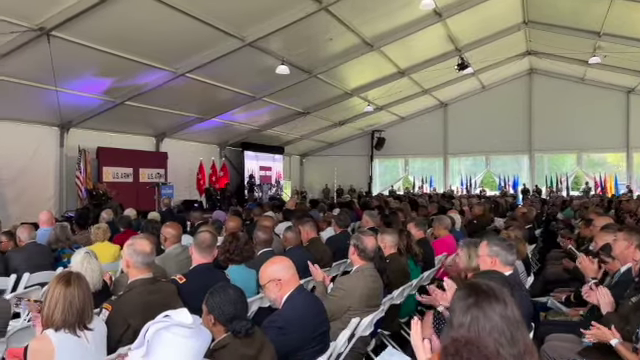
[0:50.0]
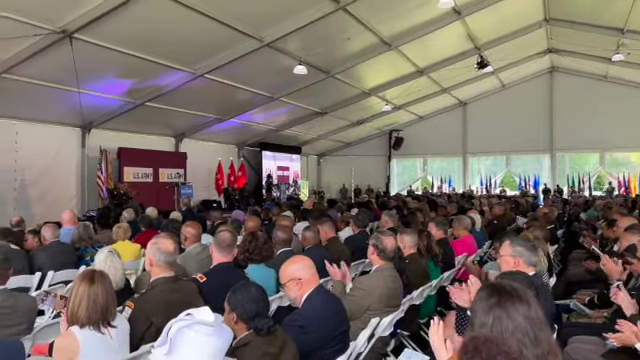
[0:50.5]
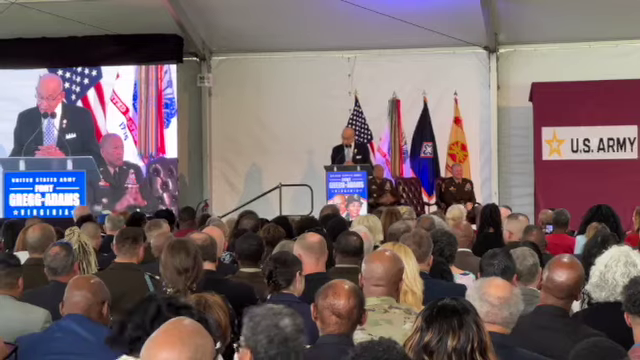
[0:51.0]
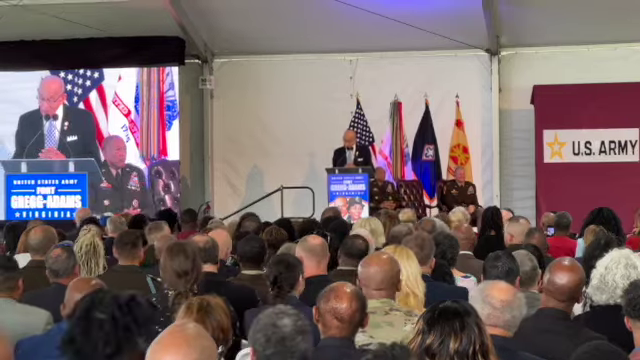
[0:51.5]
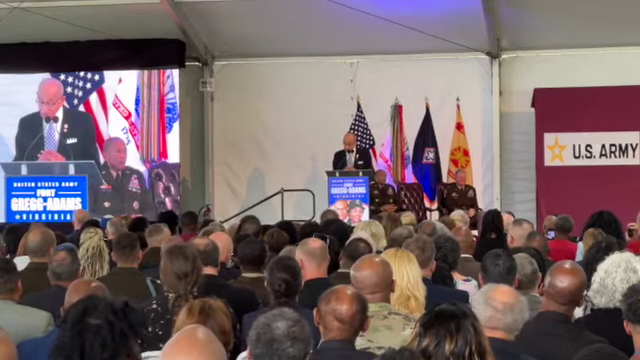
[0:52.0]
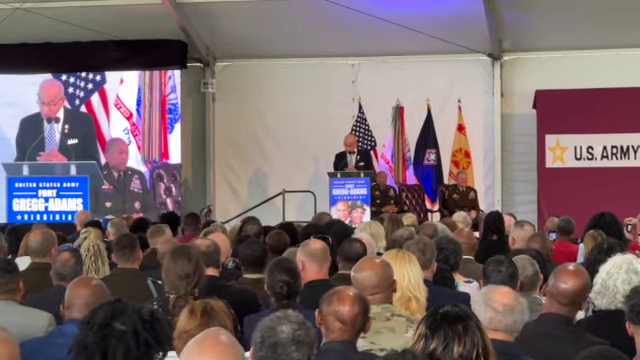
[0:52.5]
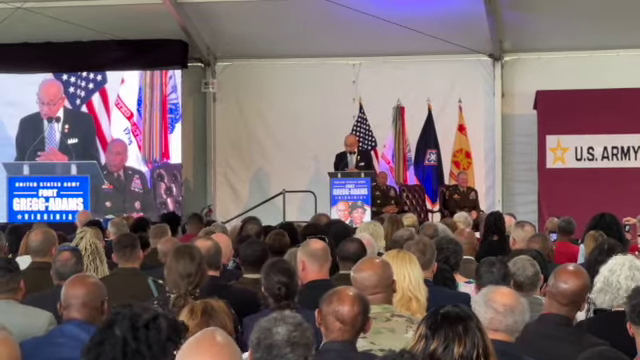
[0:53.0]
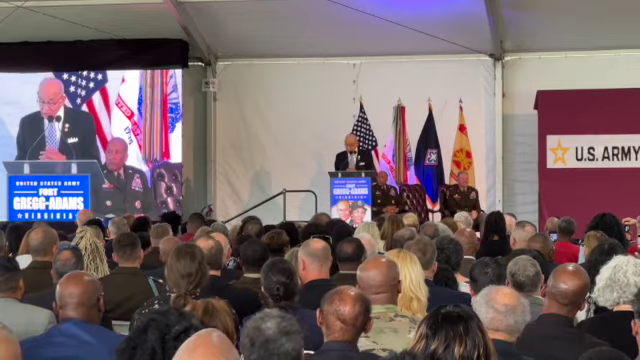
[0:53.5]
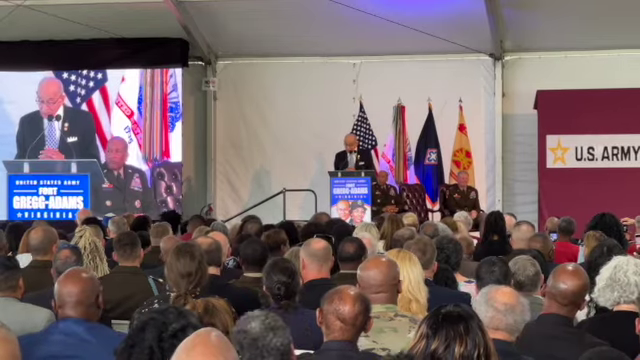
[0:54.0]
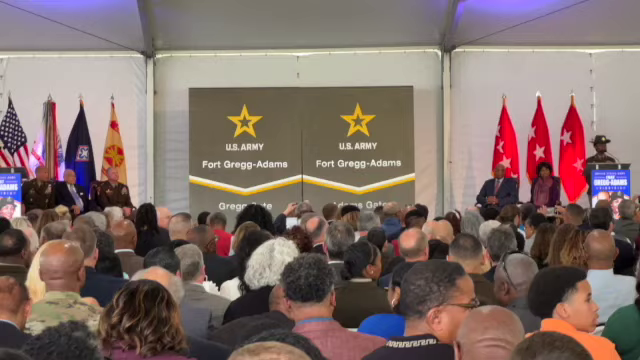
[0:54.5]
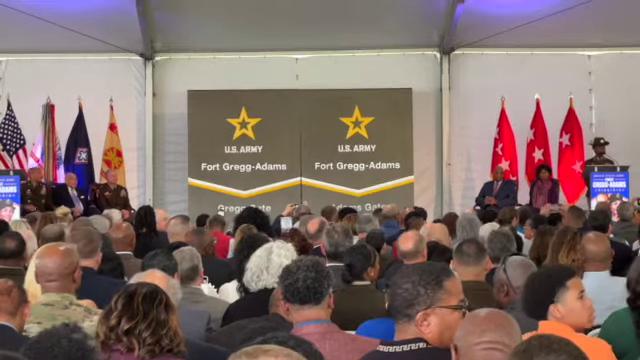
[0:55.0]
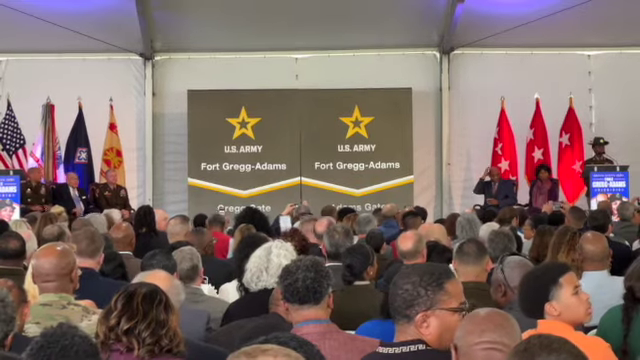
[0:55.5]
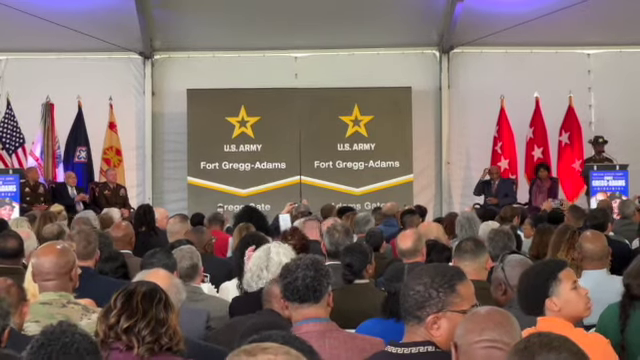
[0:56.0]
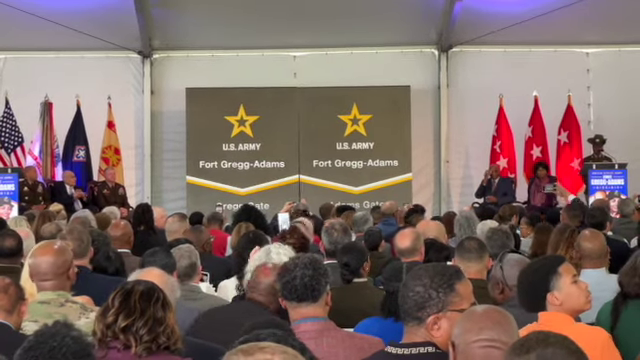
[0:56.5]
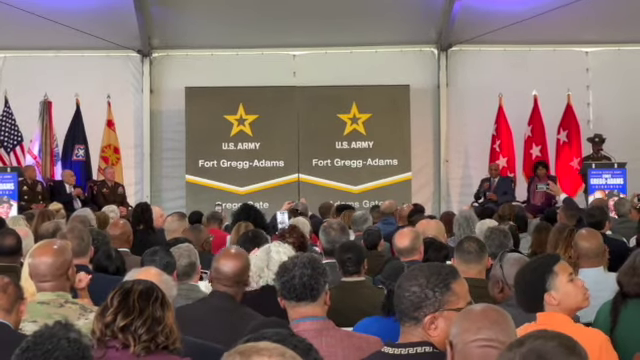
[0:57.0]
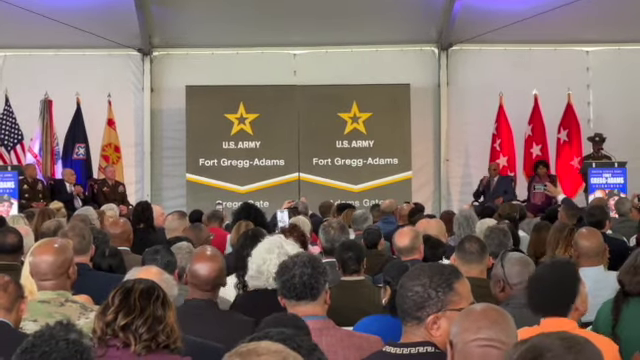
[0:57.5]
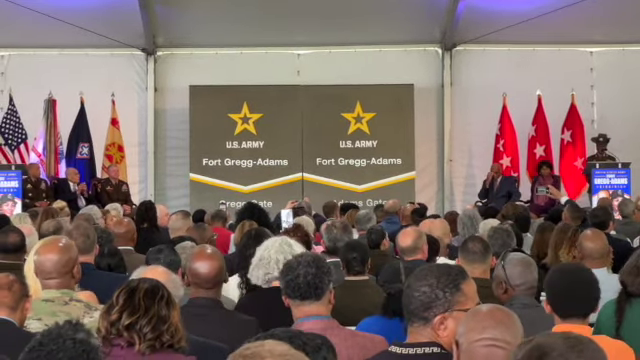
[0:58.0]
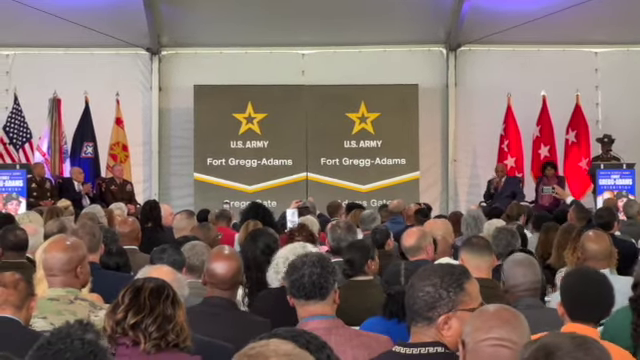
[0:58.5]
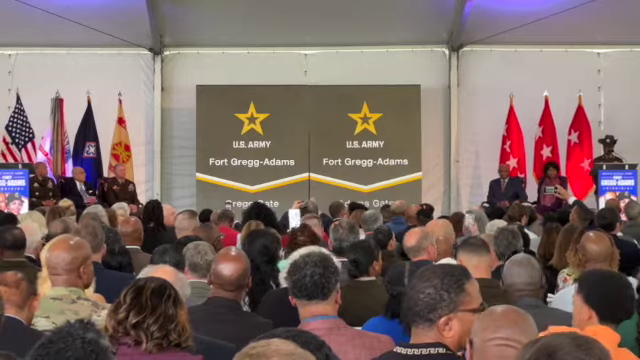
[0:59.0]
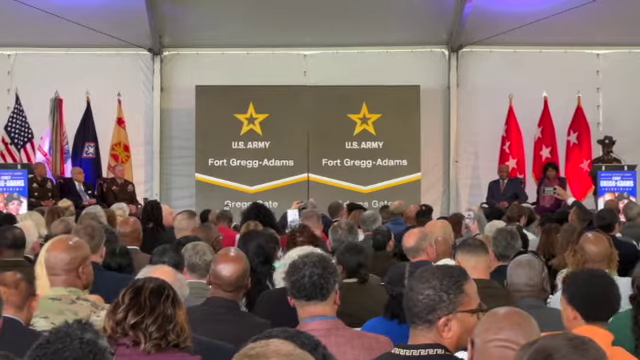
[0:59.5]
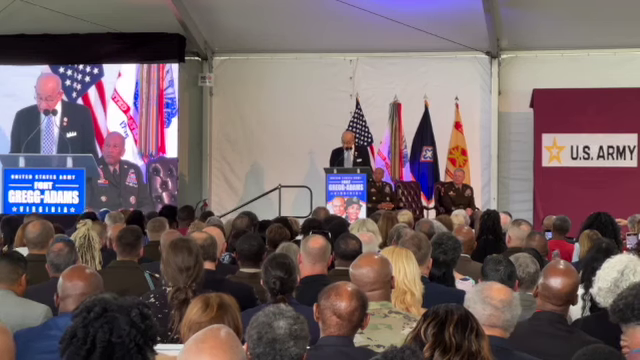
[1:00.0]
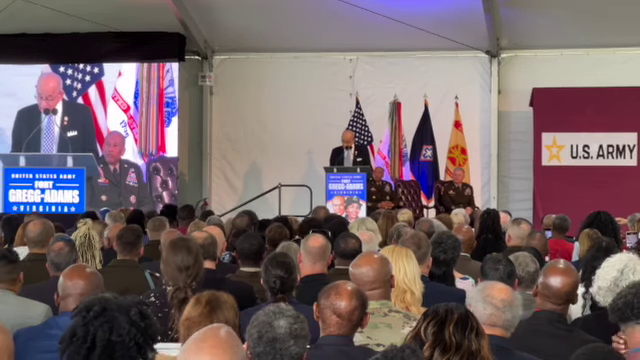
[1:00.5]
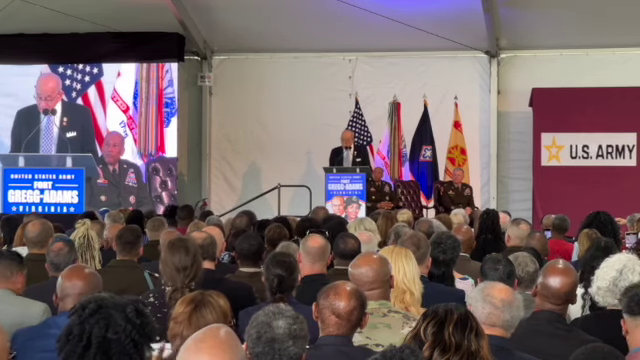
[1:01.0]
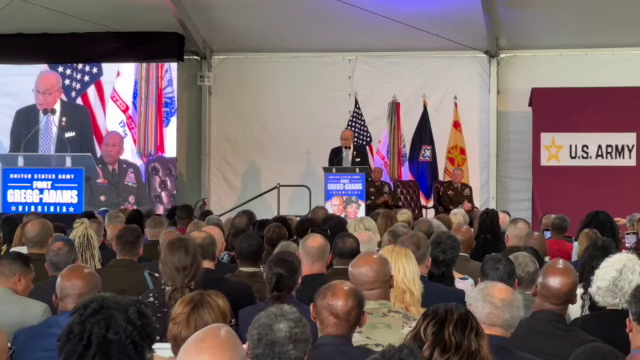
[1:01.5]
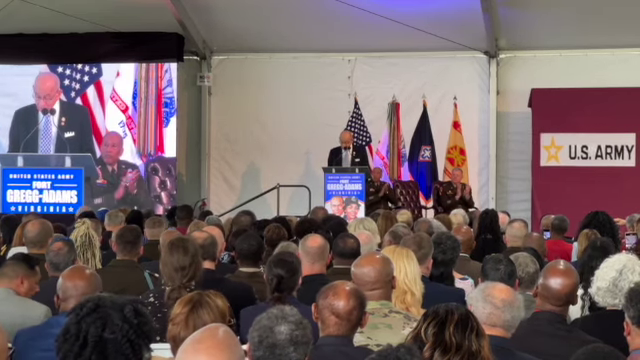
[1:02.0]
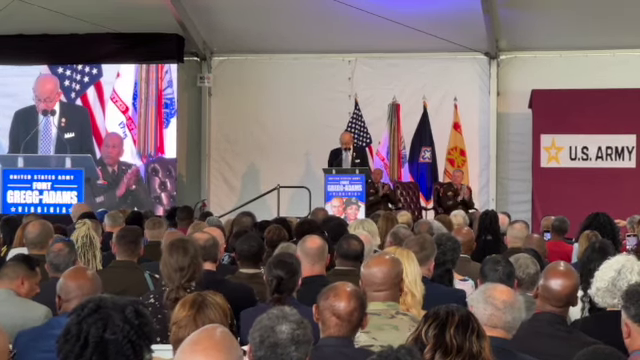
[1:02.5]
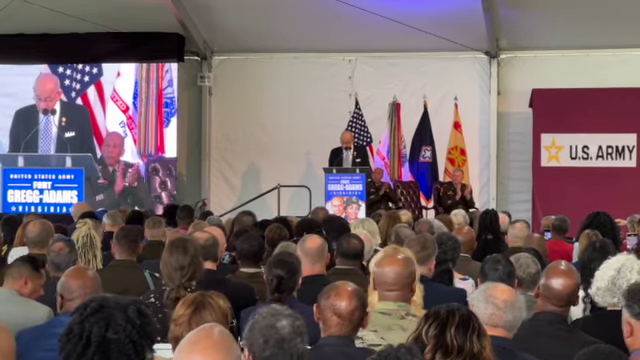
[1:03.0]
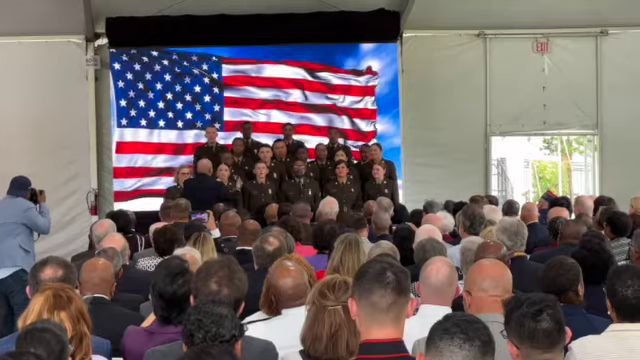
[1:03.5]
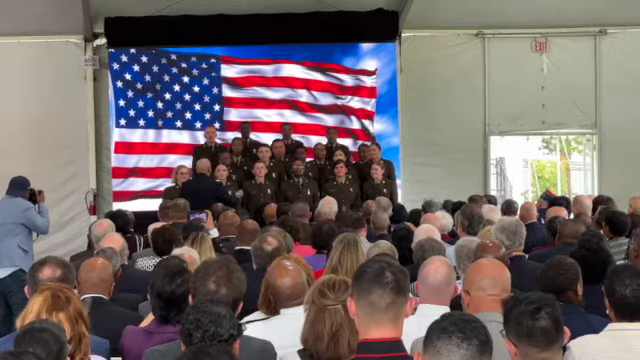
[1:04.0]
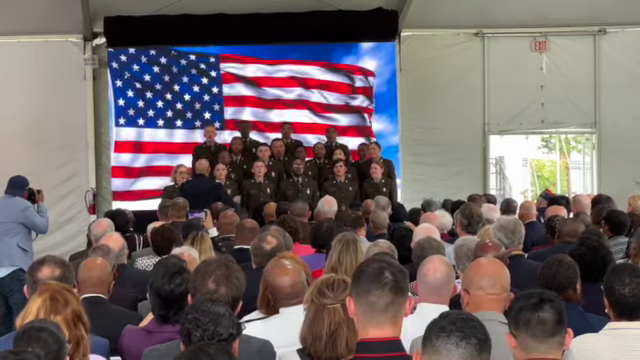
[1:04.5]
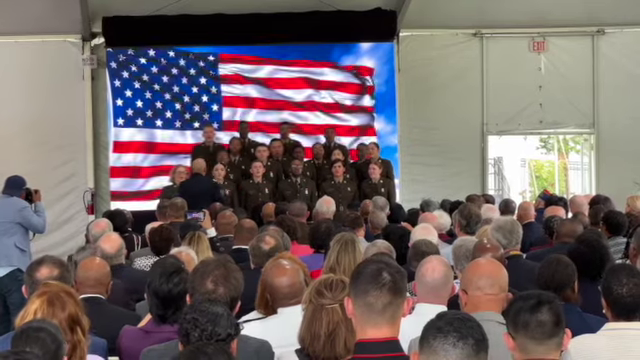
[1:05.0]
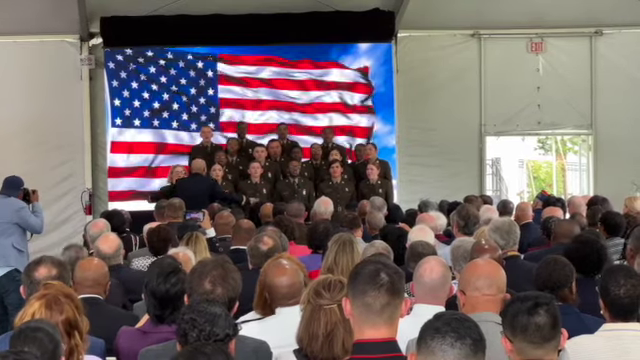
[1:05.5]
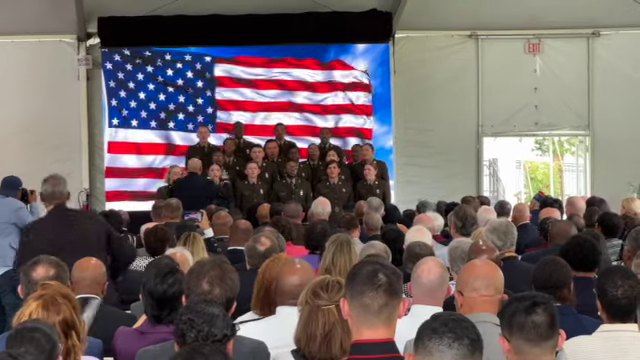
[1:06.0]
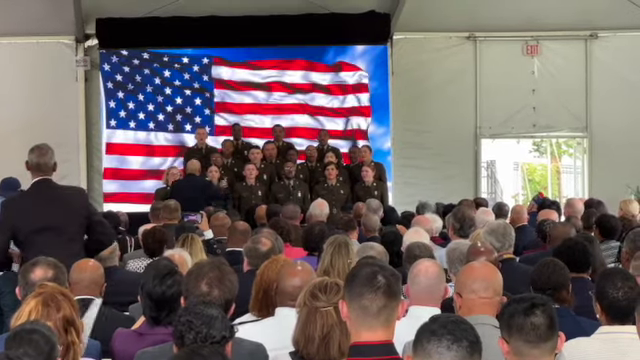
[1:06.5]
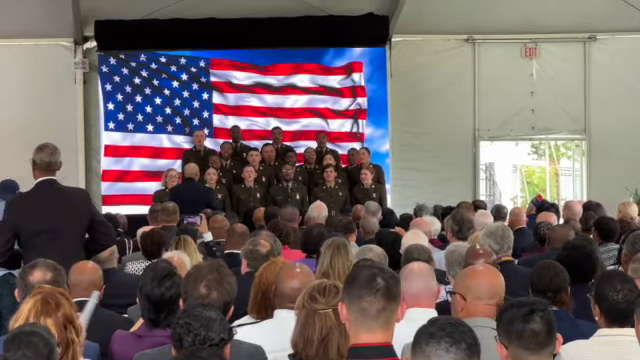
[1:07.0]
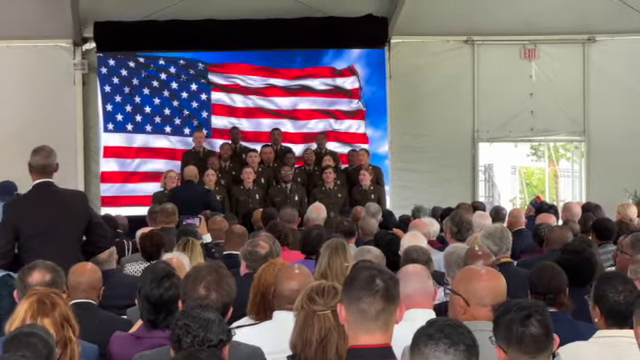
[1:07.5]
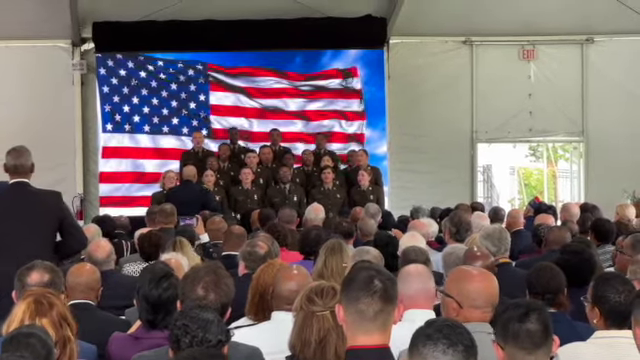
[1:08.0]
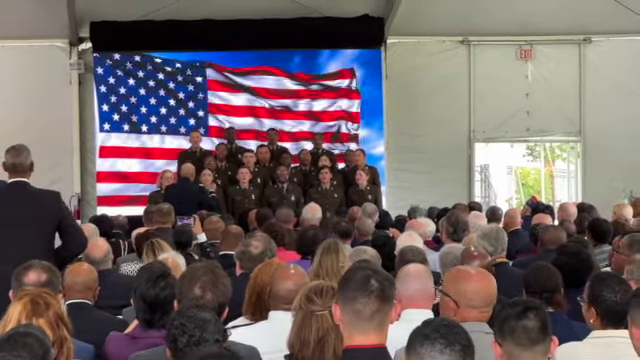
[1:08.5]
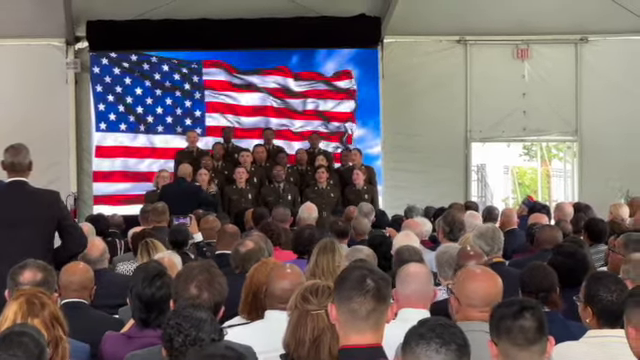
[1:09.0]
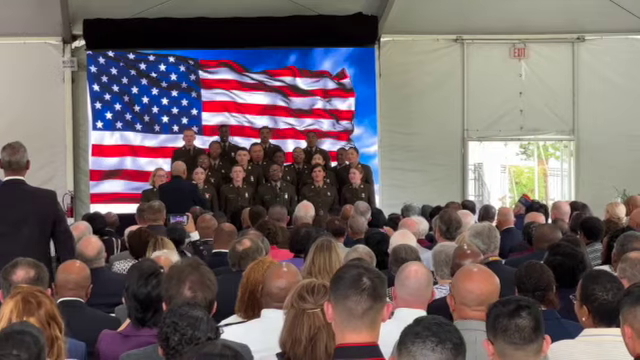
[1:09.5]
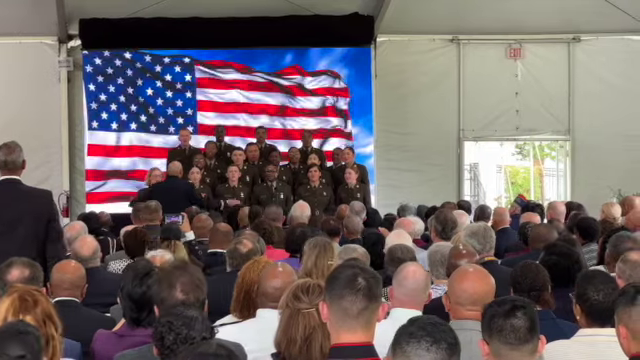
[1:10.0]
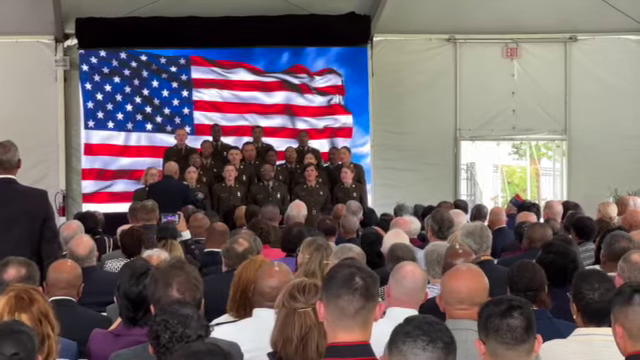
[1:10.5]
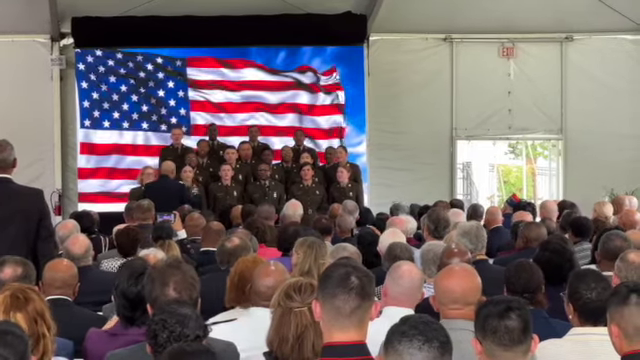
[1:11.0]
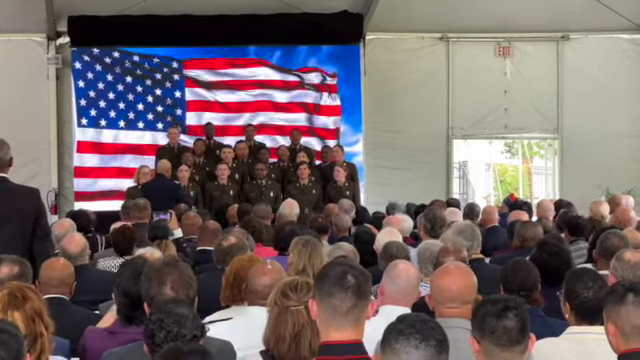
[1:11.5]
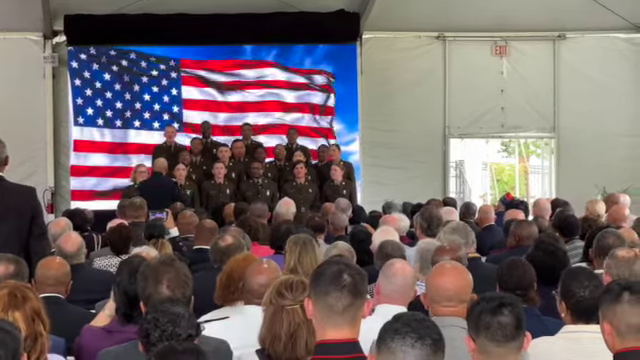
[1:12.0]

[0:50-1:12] The video seems to be about Fort Gregg Adams in Virginia. A man talks from a podium that has that name on it, and someone else talks at a podium. Army personnel then sing, with a man leading and directing them like a choir. Three red flags seem to have big white stars on them, apparently three stars or possibly two. A U.S. flag and a state of Virginia flag are also present. The choir sings in front of a video showing a big animated U.S. flag. It is daylight outside. Towards the front, the audience seems to be older people, and in the back there are younger people.